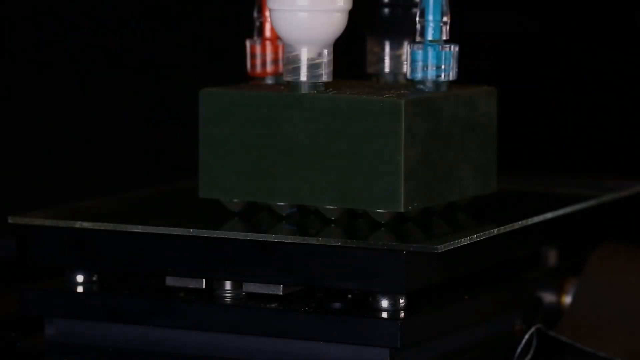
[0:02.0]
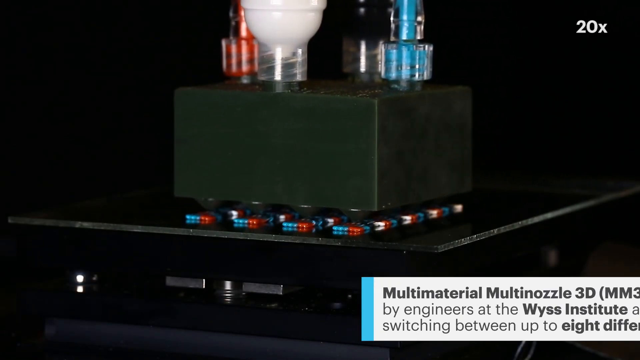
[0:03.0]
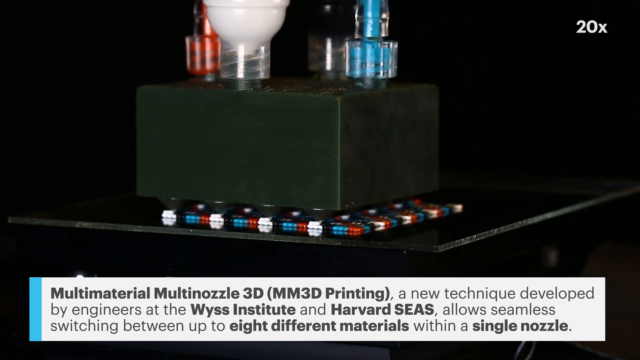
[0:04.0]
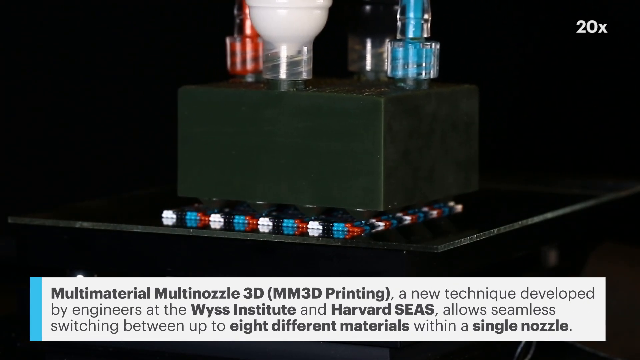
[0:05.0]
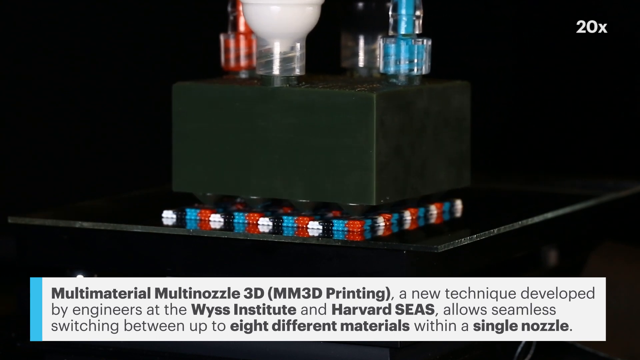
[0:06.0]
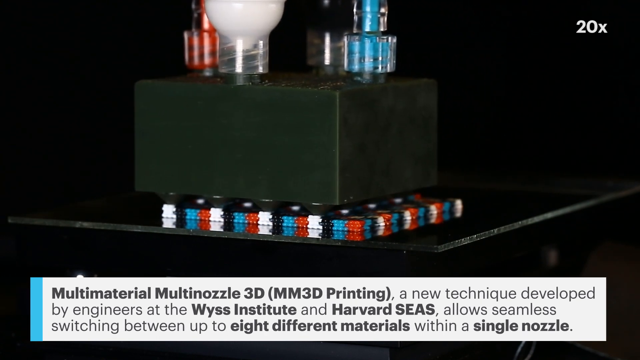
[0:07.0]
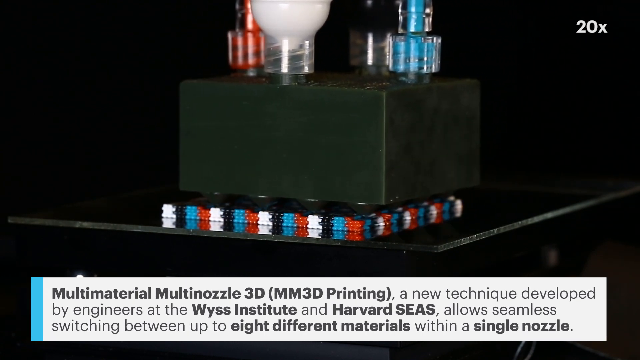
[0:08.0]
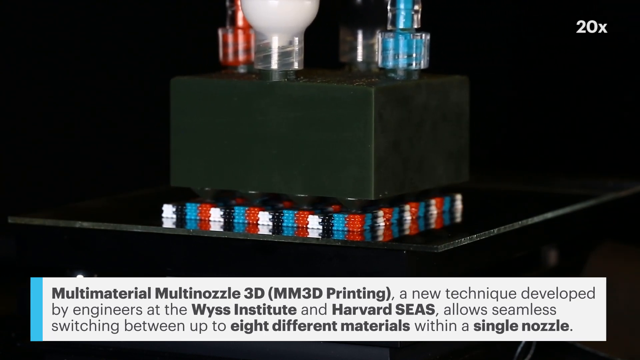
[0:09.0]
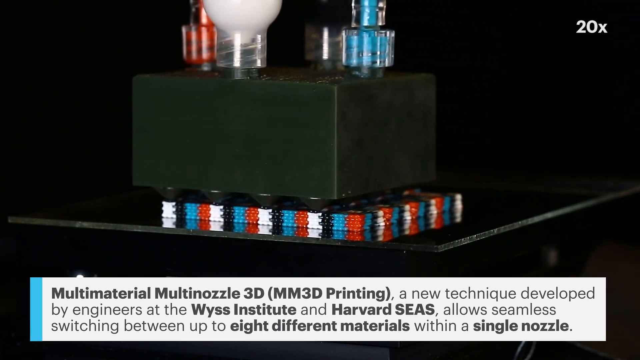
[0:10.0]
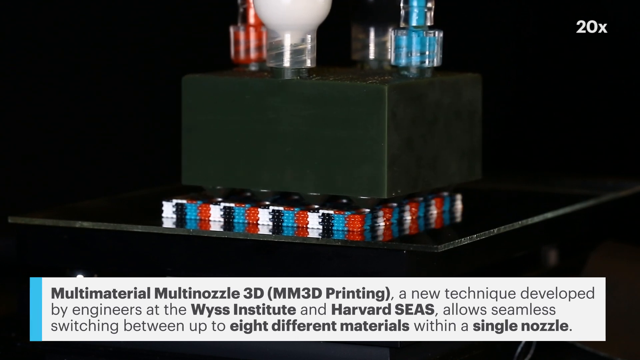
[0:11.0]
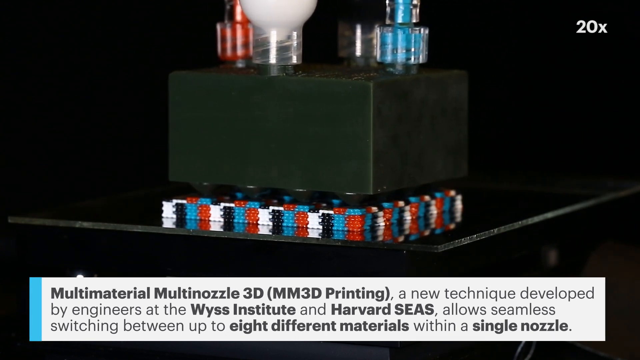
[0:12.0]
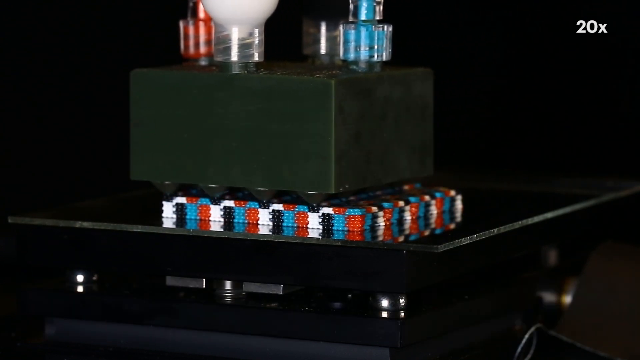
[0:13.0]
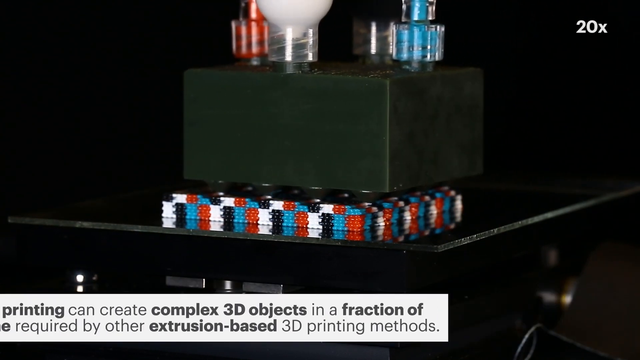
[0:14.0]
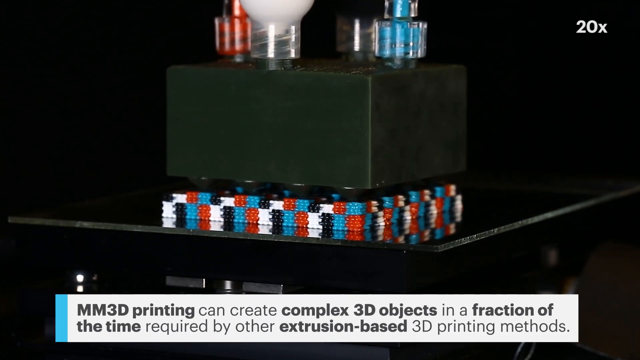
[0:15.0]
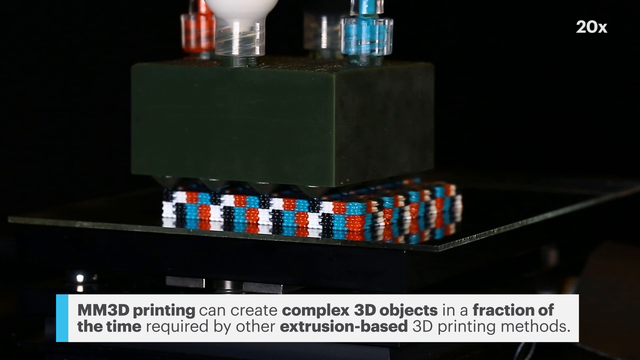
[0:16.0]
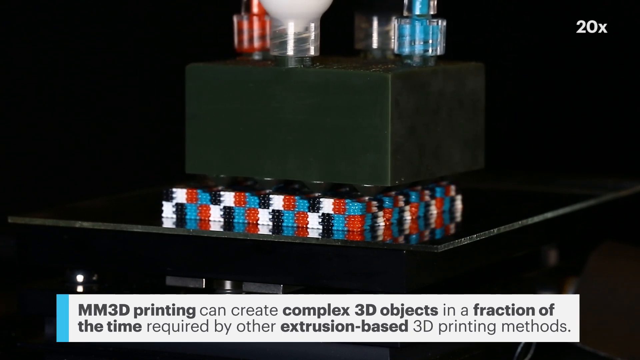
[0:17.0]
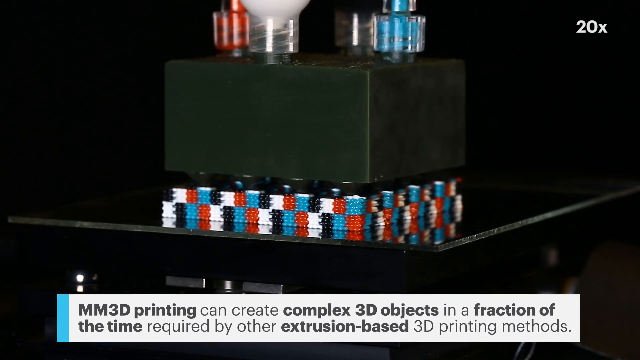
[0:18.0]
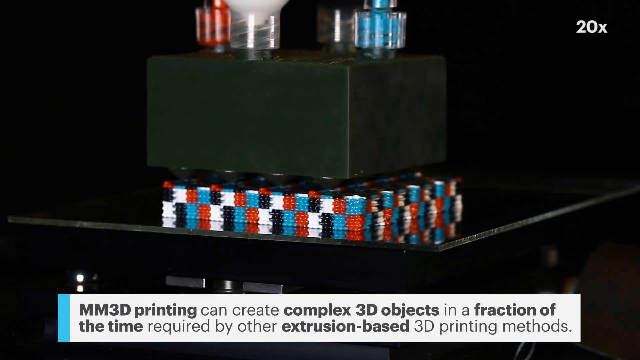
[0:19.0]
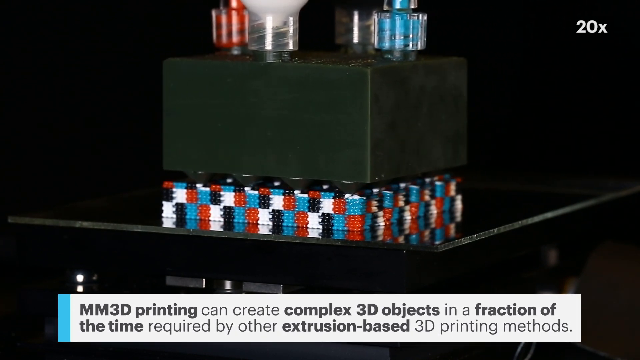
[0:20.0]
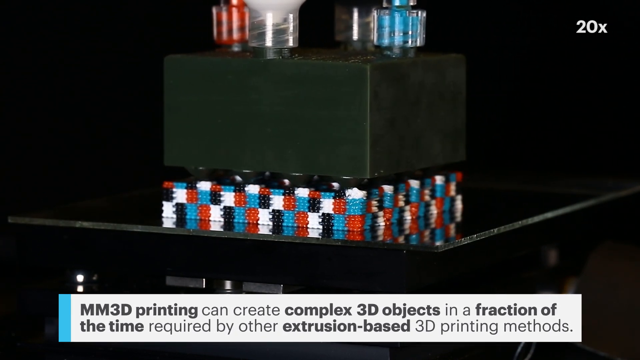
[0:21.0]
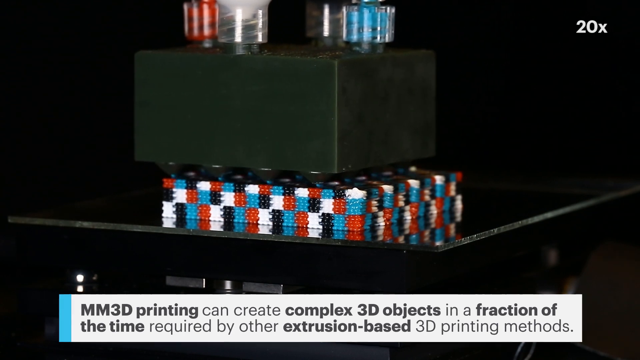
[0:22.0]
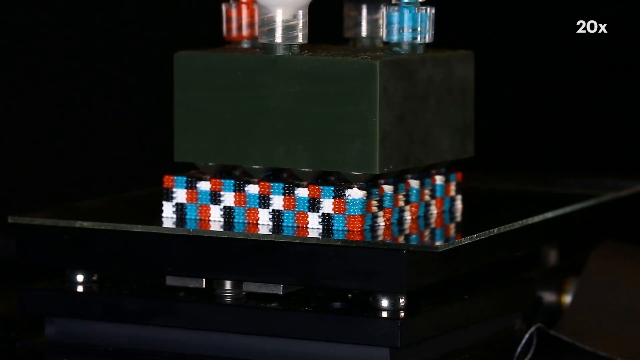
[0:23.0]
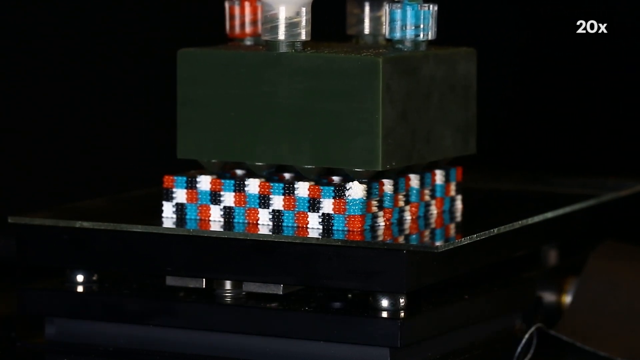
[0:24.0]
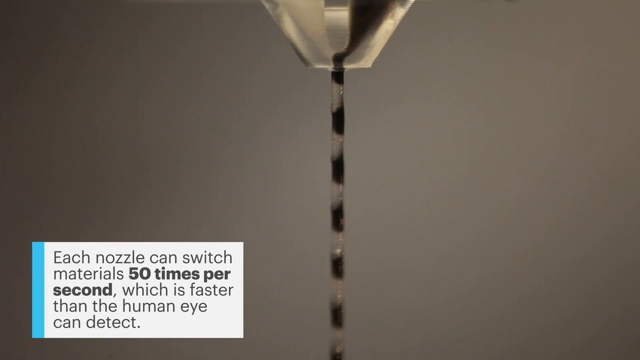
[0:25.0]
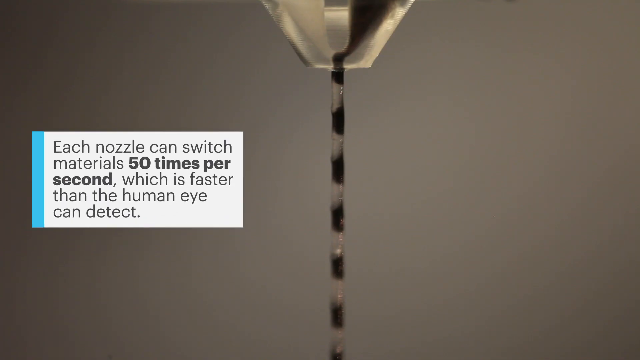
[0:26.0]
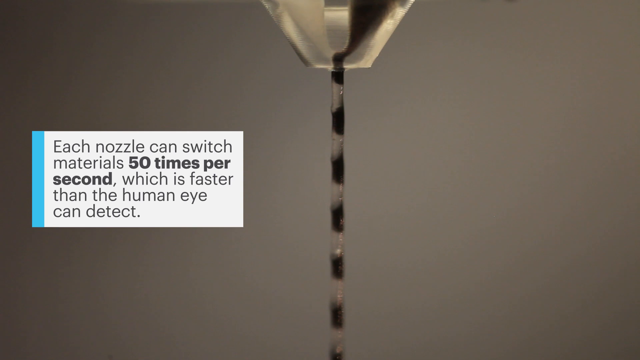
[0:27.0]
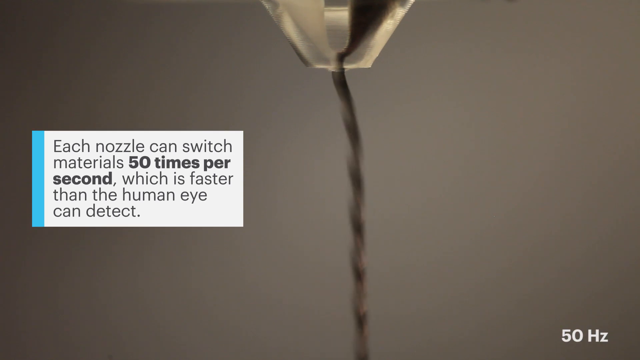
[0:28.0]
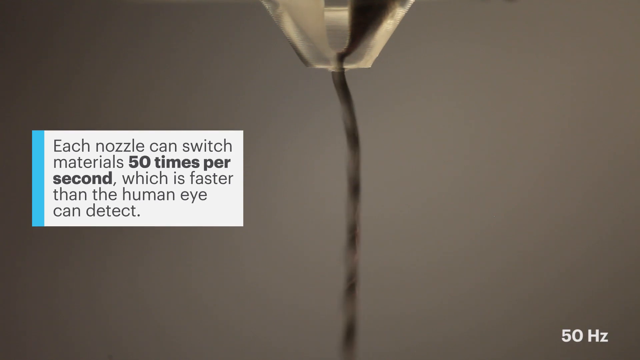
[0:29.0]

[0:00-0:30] The video opens on a printing device that looks very high-tech: a series of nozzles is attached to a black box-type structure, with a small number of plates below it. On-screen text explains that this is multi-material multi-nozzle 3D printing, a new technique developed by engineers at the Wyss Institute and Harvard SEAS that allows seamless switching between up to eight different materials within a single nozzle. The machine then prints what appears to be an item while continually changing the colour. Text states that it can create complex 3D objects in a fraction of the time required by other extrusion-based 3D printing methods. A structure, a component of some sort, builds up rapidly, coloured black, white, red and blue. A close-up of a nozzle follows, with text stating that each nozzle can switch materials 50 times per second, faster than the human eye can detect.